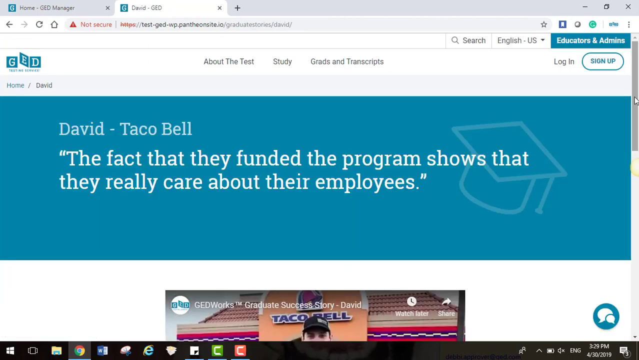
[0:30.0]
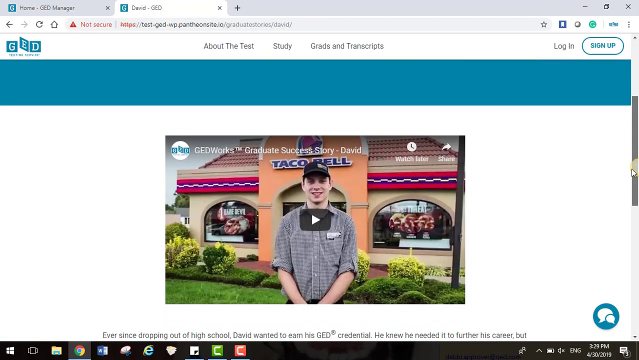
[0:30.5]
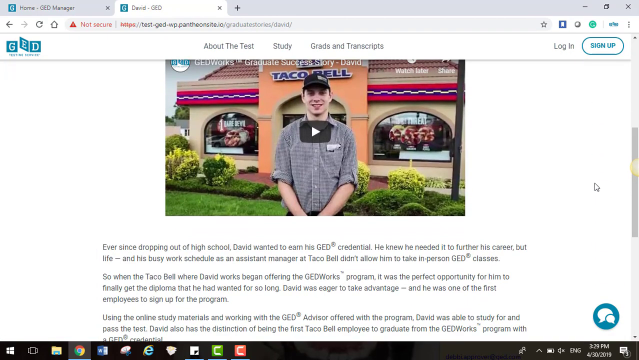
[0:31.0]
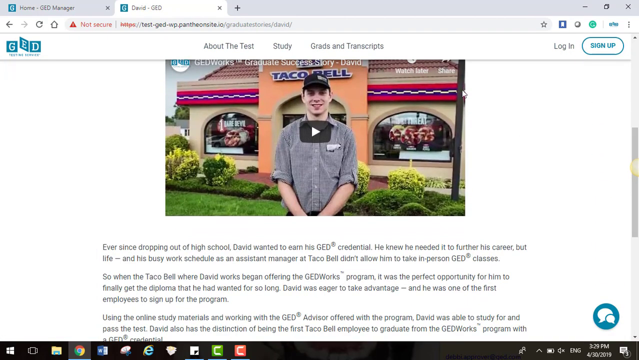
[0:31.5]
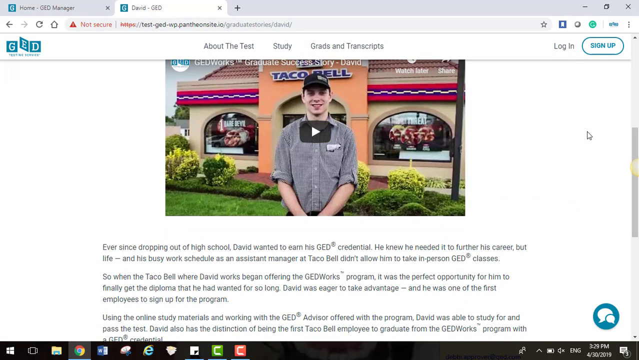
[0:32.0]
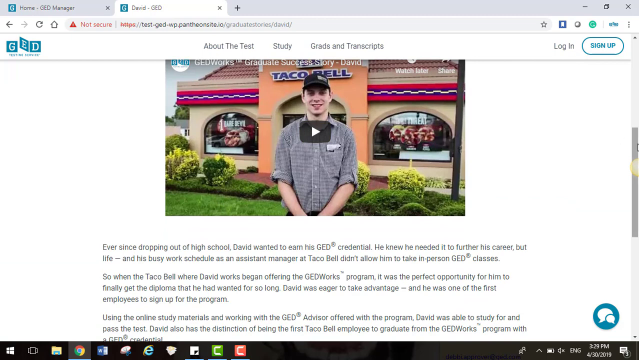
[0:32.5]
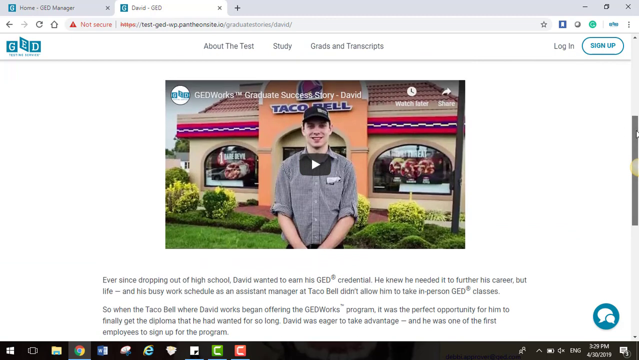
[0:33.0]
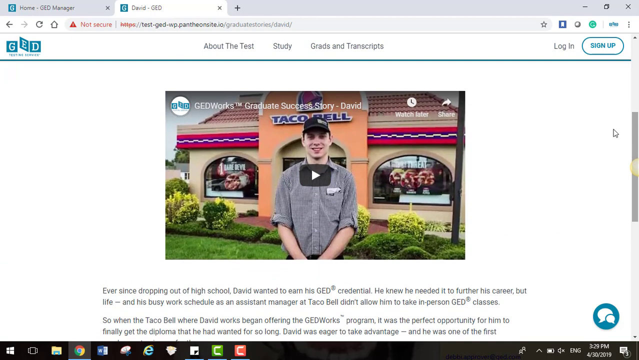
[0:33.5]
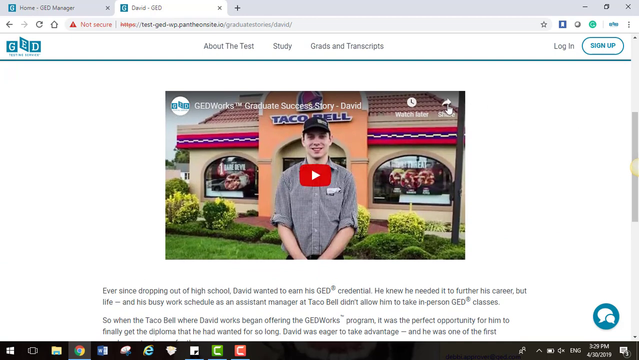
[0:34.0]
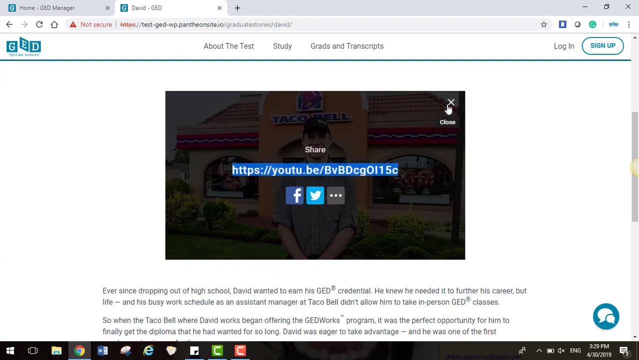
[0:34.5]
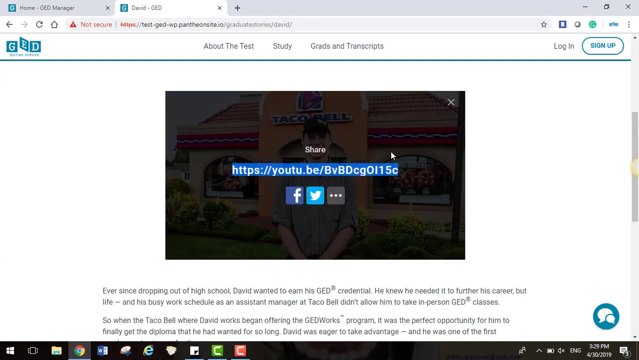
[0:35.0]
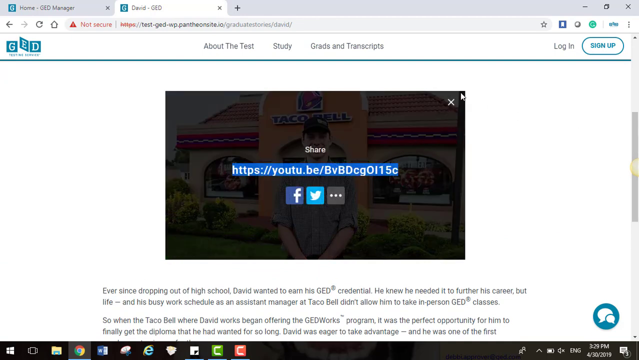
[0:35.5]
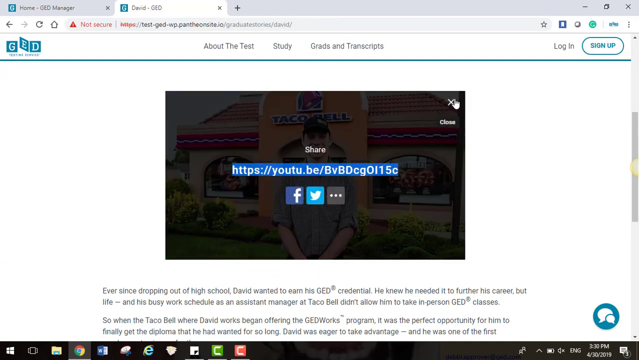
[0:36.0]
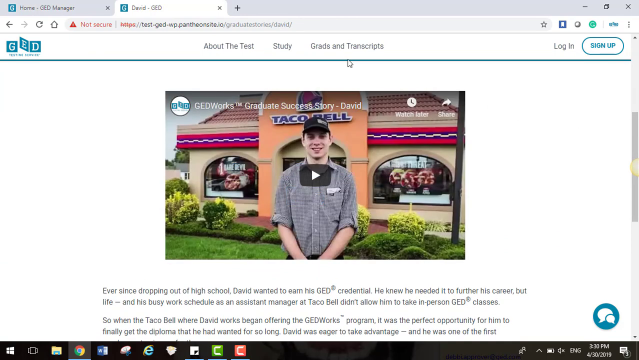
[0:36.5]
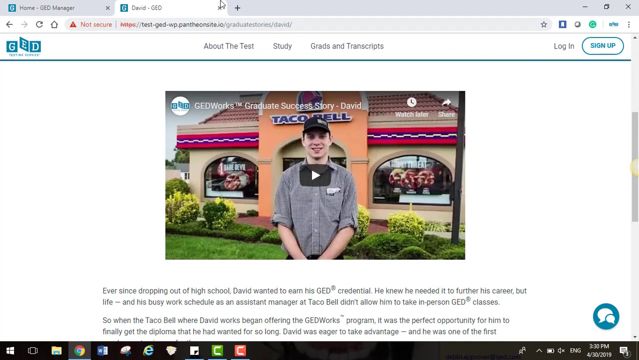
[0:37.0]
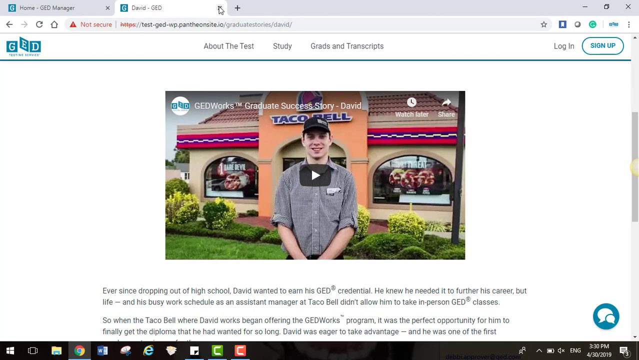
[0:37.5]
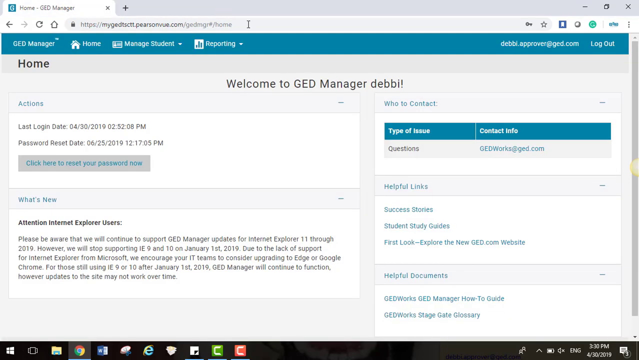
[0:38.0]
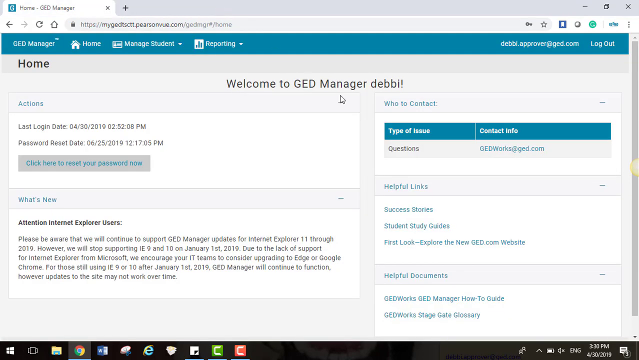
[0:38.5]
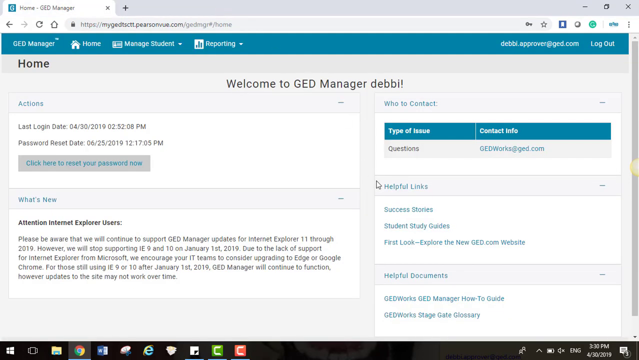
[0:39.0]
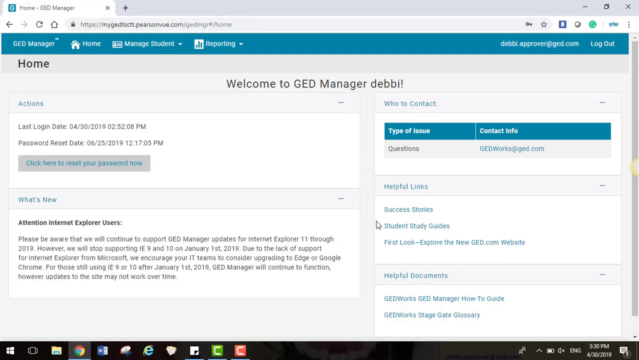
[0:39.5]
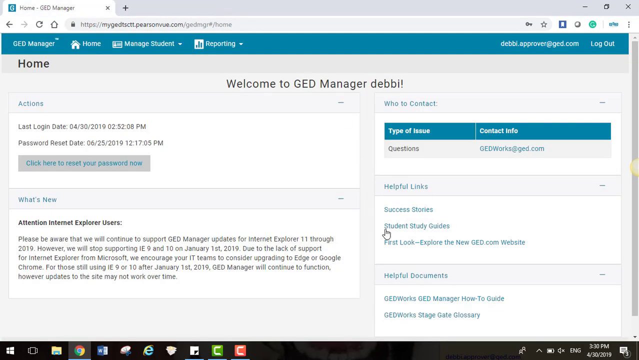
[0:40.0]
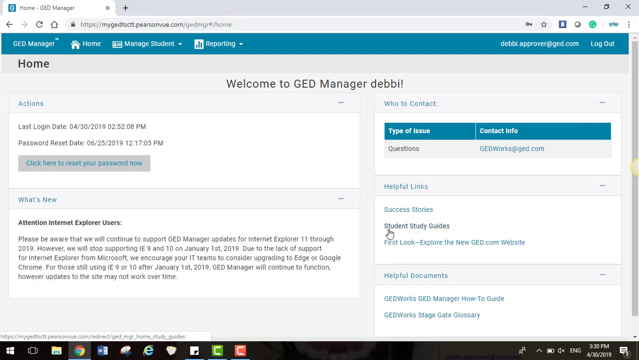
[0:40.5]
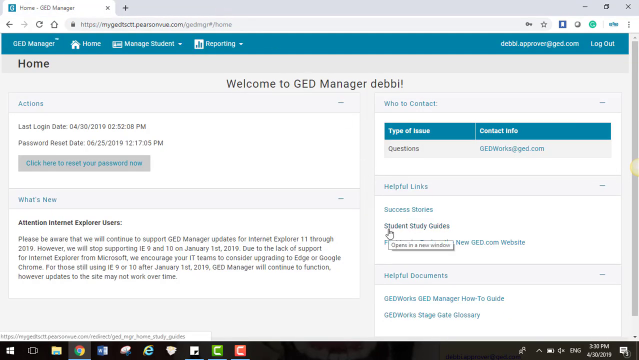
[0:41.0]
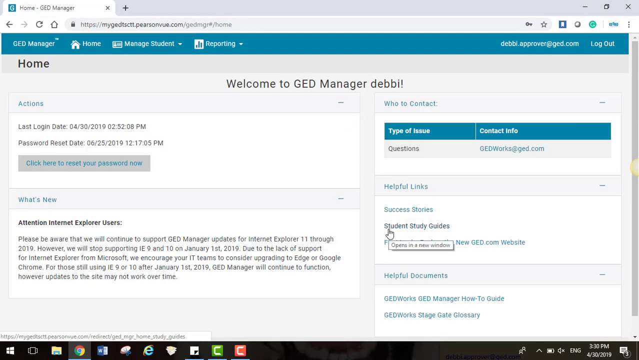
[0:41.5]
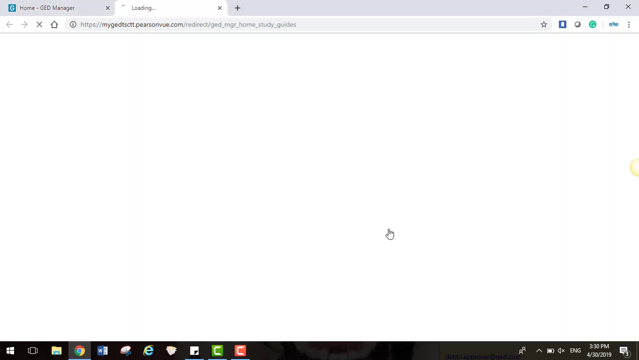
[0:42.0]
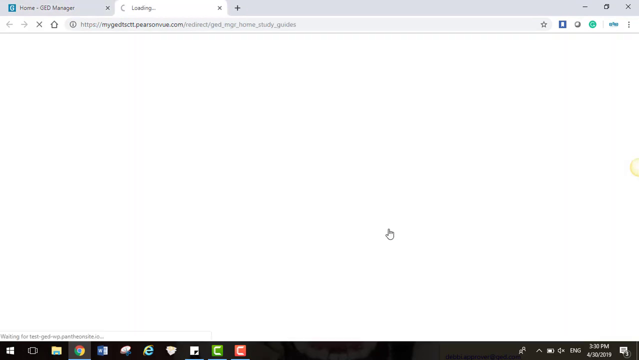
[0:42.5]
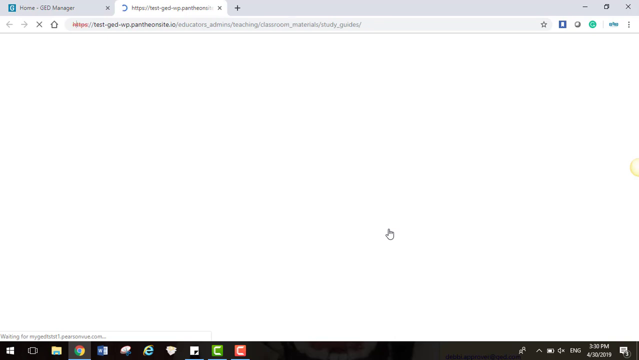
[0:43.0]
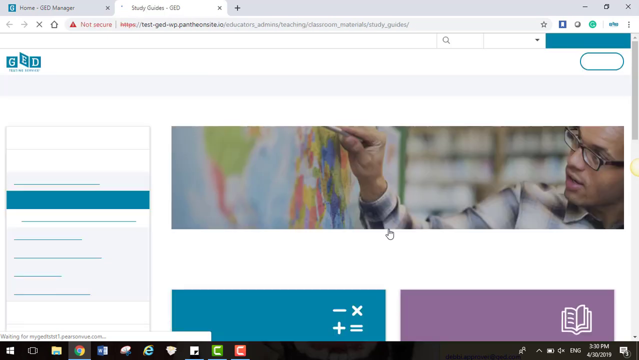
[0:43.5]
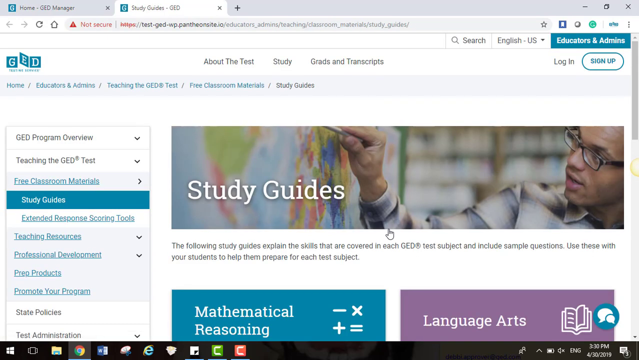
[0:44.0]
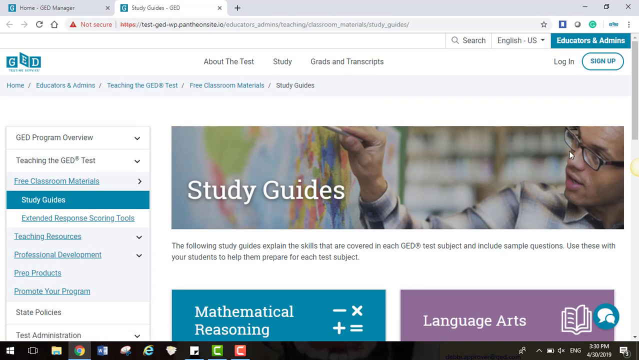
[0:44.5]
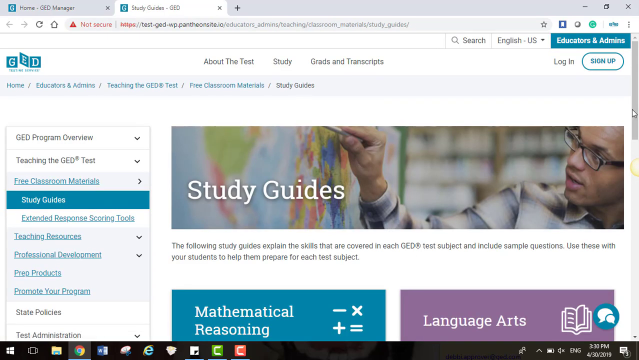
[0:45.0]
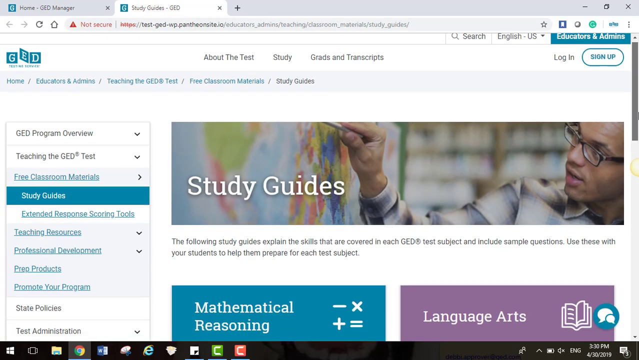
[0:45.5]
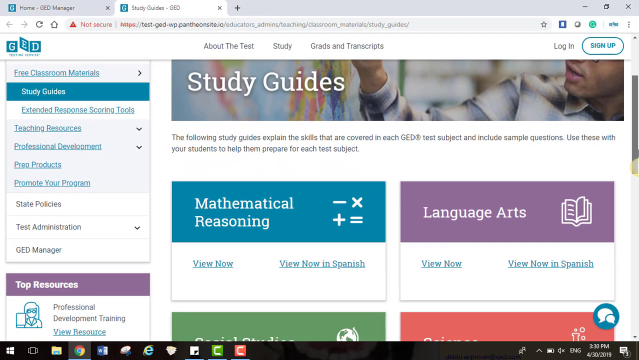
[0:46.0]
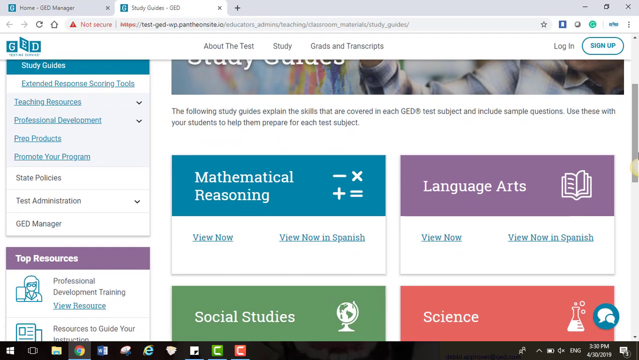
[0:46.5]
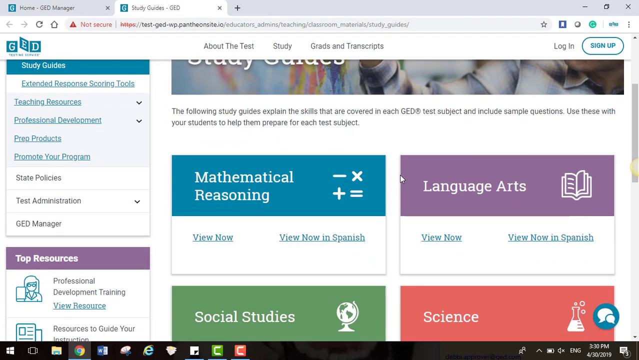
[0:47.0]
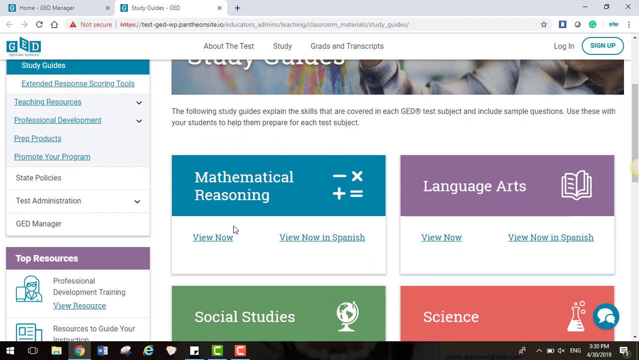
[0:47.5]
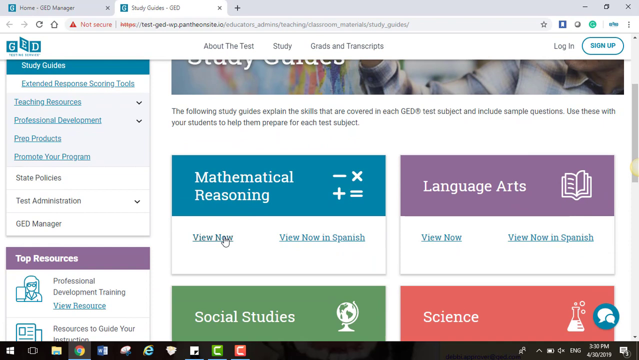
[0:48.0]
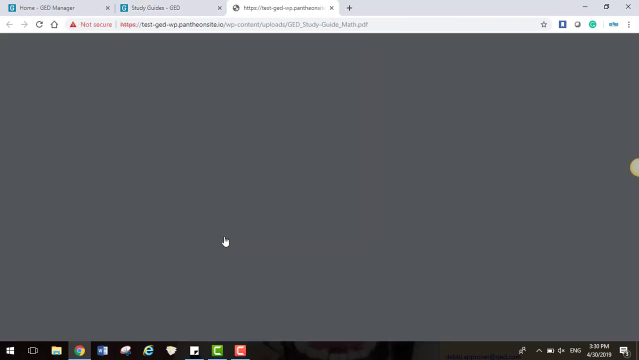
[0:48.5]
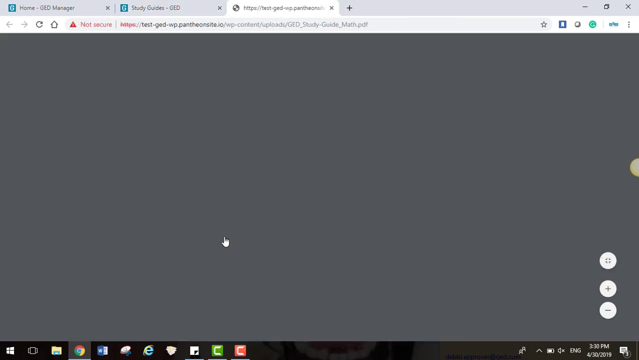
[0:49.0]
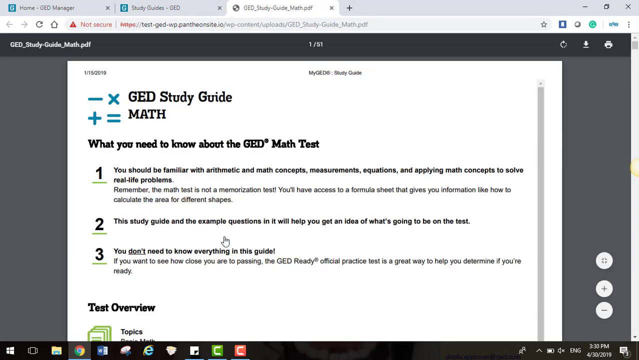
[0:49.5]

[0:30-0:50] The user is interacting with an internet browser that has two tabs open, currently viewing the second tab, a web page called GED. The breadcrumb link shows navigation from home to a page for David, and the title shows this is David from Taco Bell. A quote reads, "The fact that they funded the program shows that they really care about their employees." The user moves the cursor to the right side and scrolls down with the scroll bar to an embedded YouTube video, then clicks a button that says share in the top right hand corner of the video. This brings up a pop-up with a link to copy and share. The user does not appear to copy it with the mouse, and closes this window, then closes the whole tab. Back on the first tab, a home landing page for the GED manager, the user selects the second option, student study guides, under the helpful links section on the right side of the page. A new page loads with the title study guides, and the user moves the cursor to the right scroll bar and scrolls down, showing four rectangular boxes for different subjects. The user clicks the view now button under the mathematical reasoning subject box, on the left side of the top row, which loads a new page with a document.